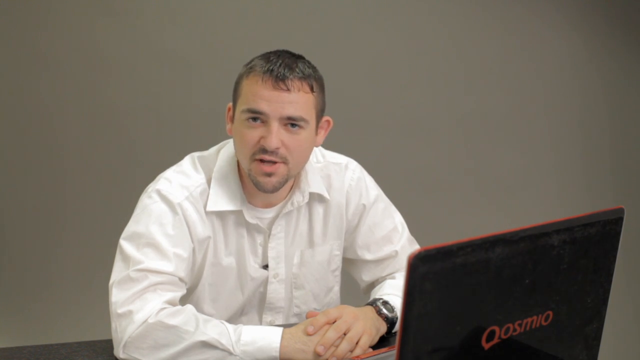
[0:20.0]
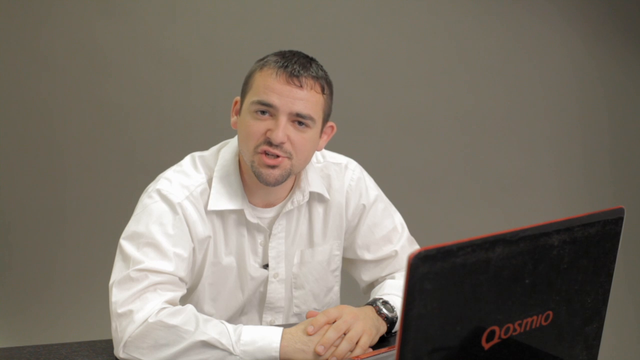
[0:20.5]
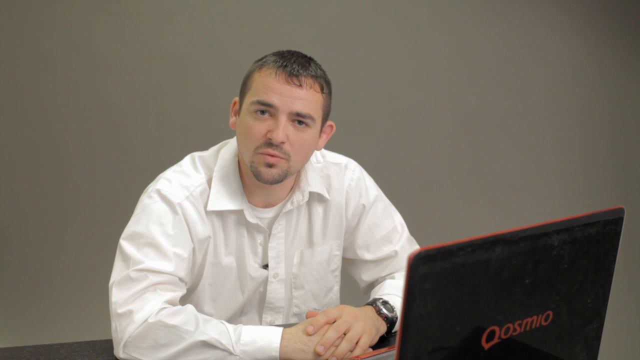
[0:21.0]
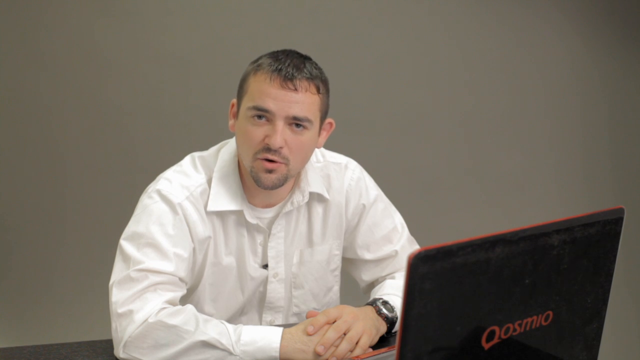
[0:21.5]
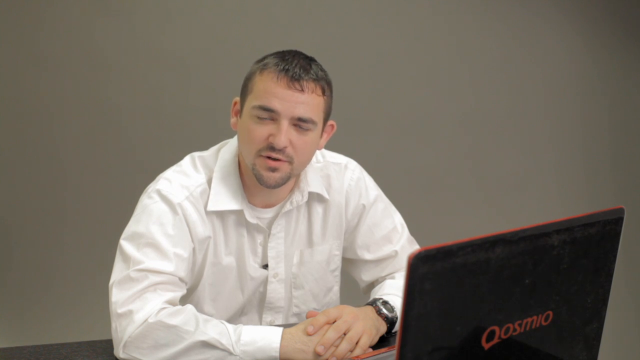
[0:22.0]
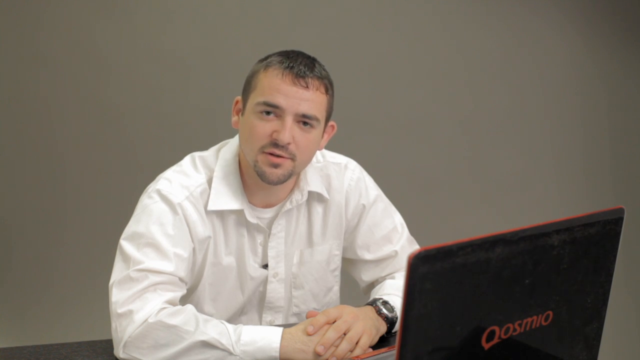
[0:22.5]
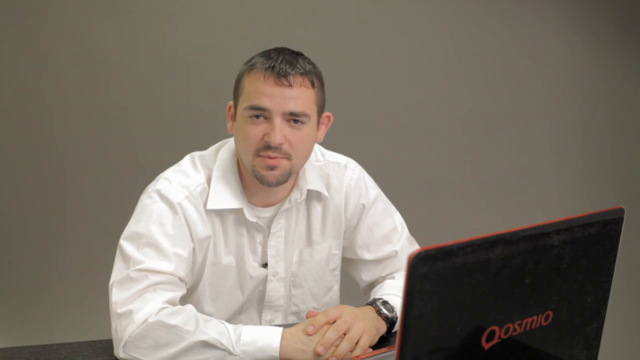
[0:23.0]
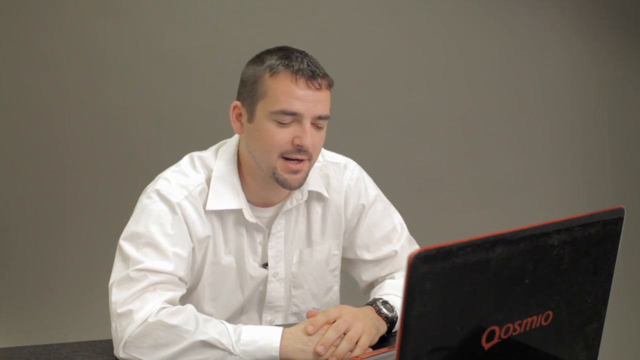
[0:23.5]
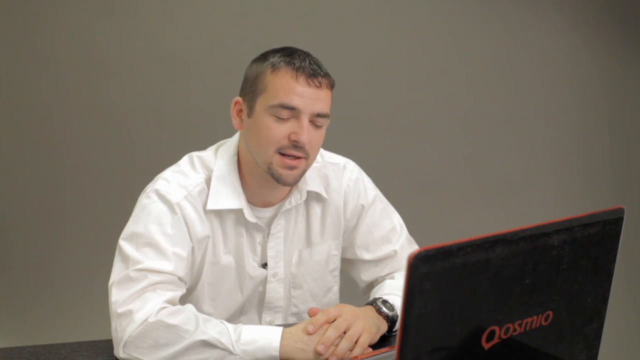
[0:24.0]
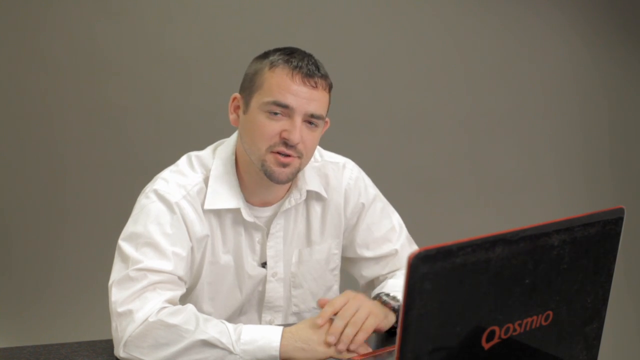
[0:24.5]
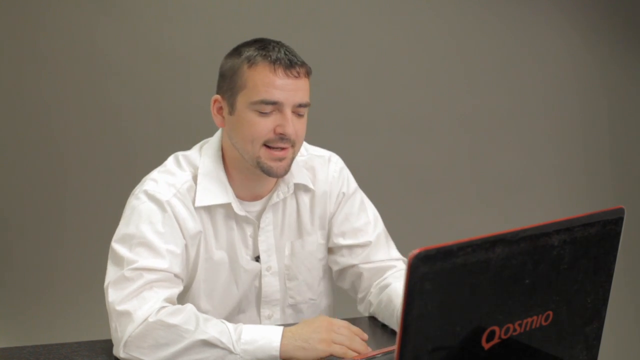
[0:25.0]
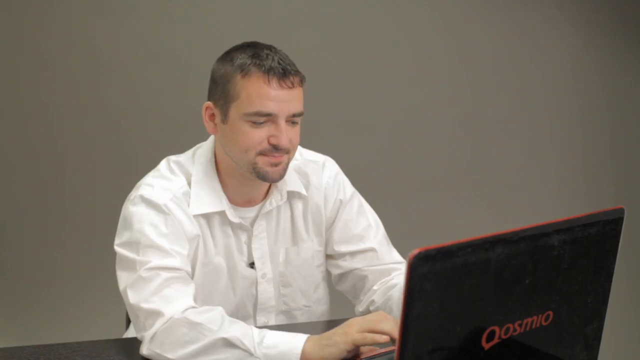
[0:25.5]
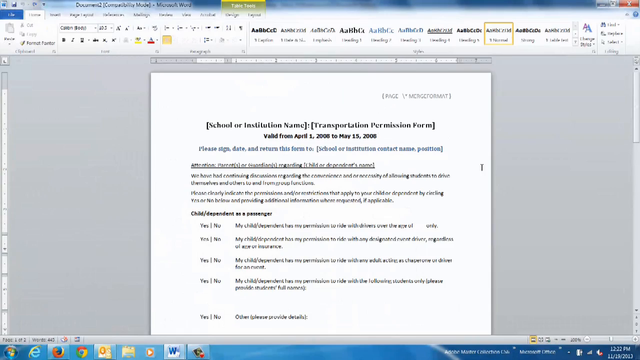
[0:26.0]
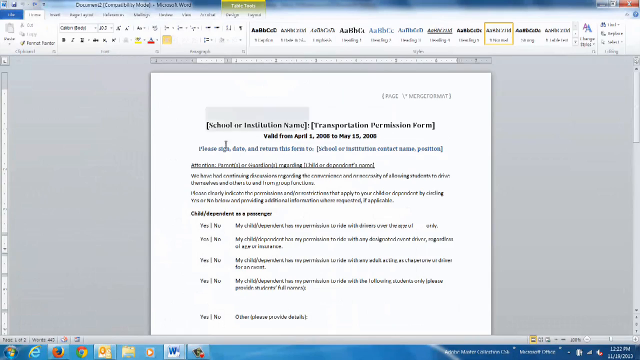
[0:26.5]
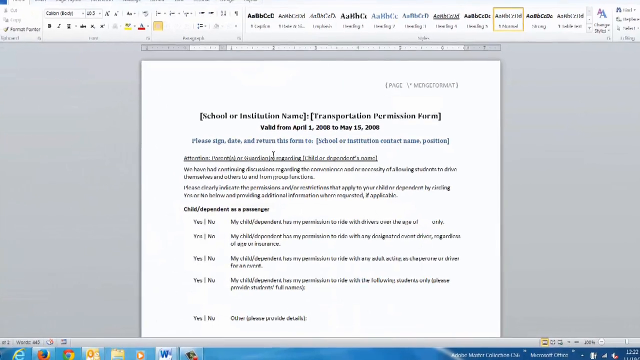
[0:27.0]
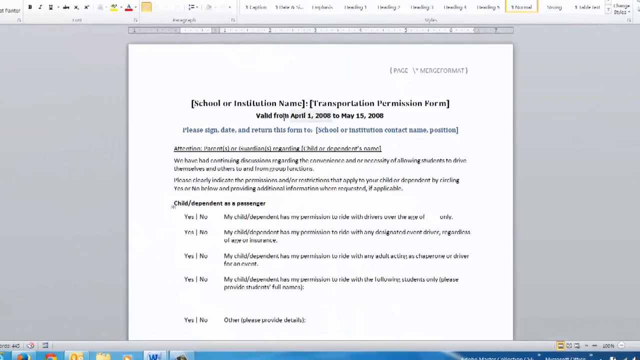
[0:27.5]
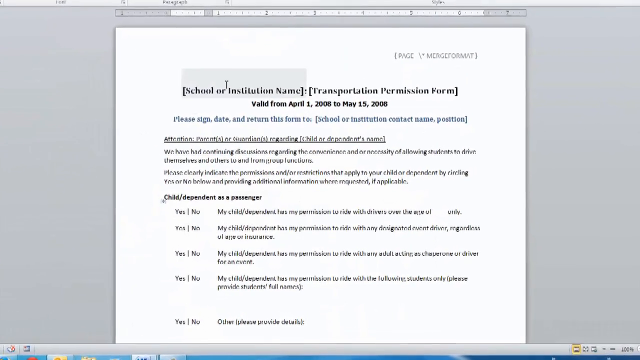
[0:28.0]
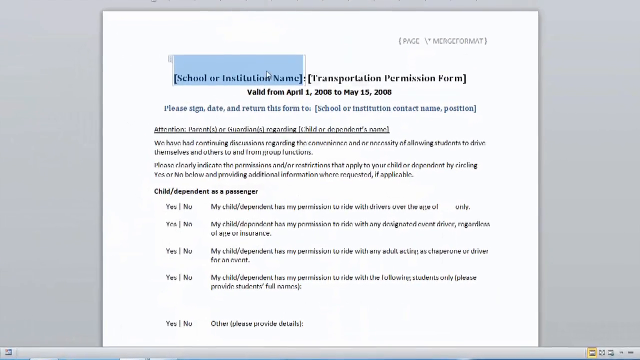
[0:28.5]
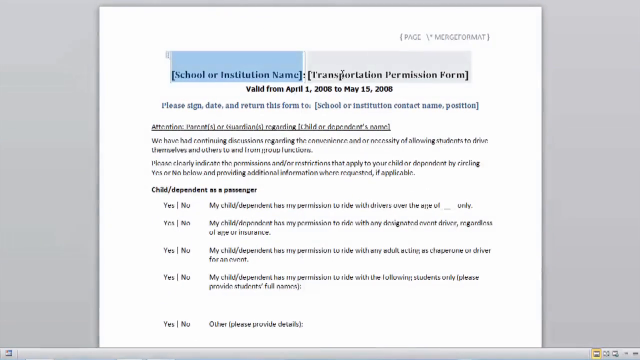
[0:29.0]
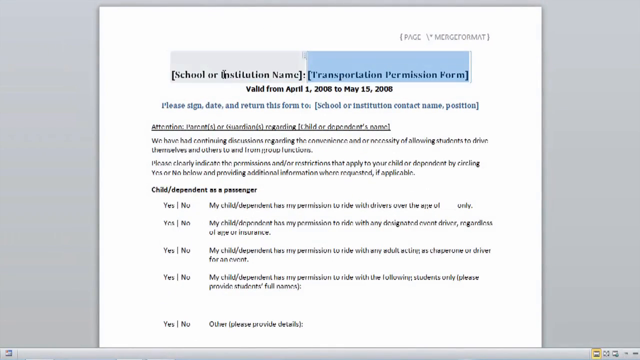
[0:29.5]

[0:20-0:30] The man in the white long-sleeved button-up shirt with a white shirt underneath sits in front of the laptop with his hands folded on the table, his left hand on top of his right, and keeps talking to the camera. When he finishes, he moves his left hand to the laptop and then puts his right hand on the laptop as well. The Word document application is shown with the form again. The cursor moves in circles on top of the Word document template, and as it moves over certain text, that text is highlighted in blue.